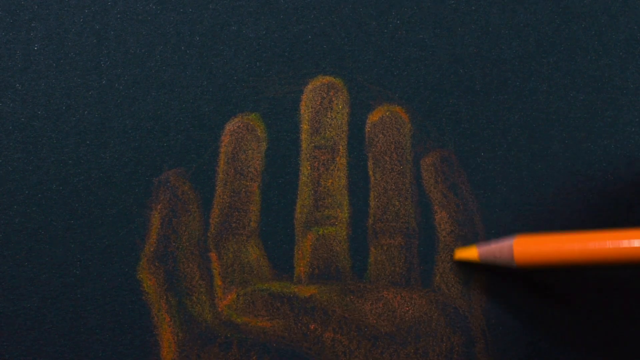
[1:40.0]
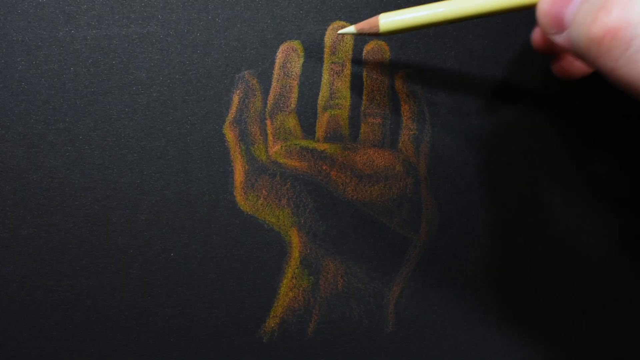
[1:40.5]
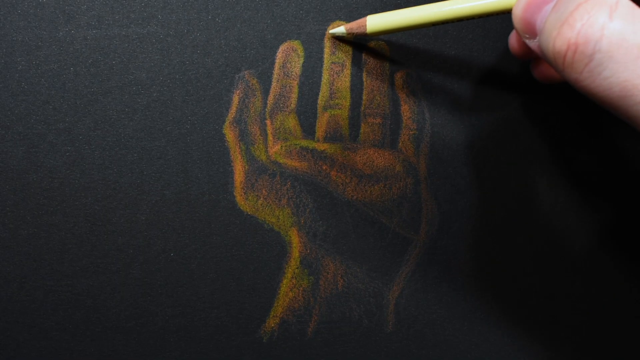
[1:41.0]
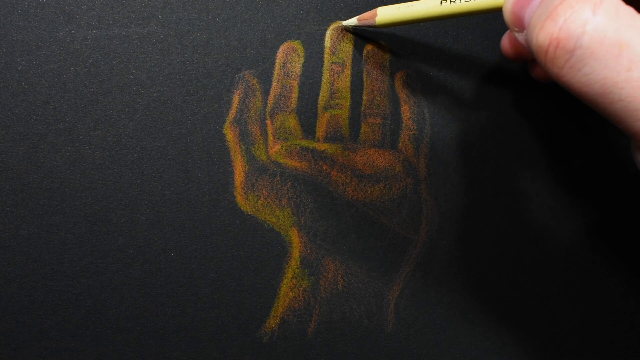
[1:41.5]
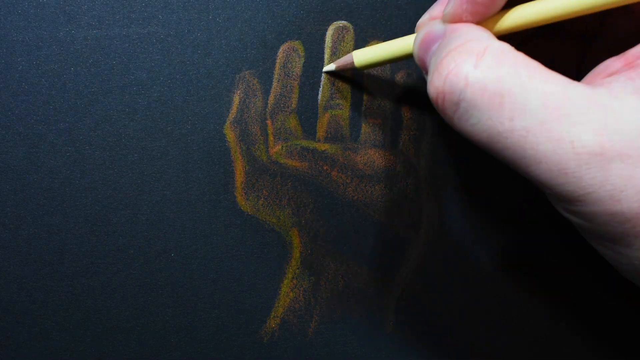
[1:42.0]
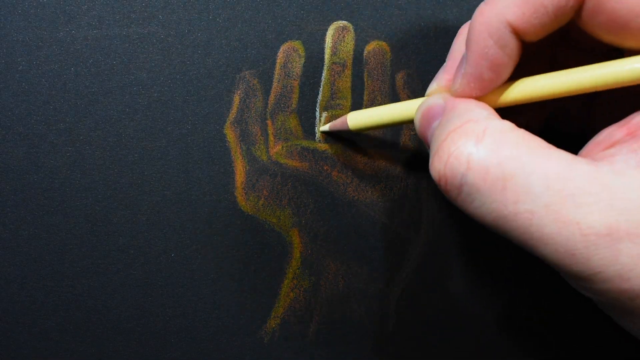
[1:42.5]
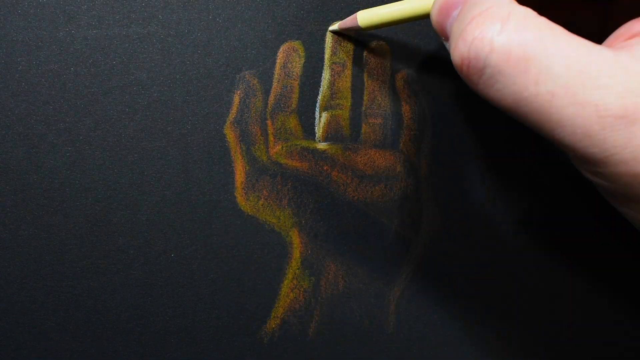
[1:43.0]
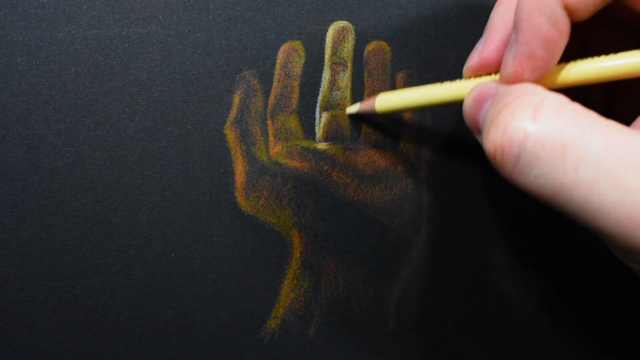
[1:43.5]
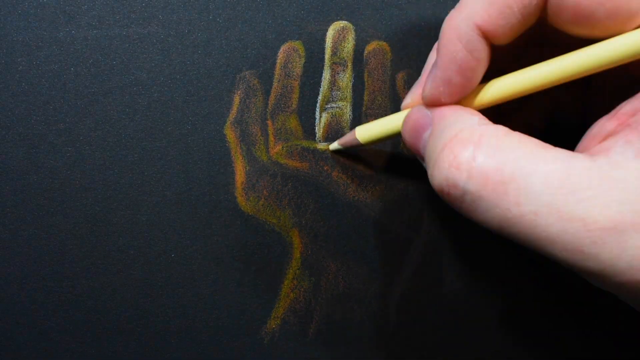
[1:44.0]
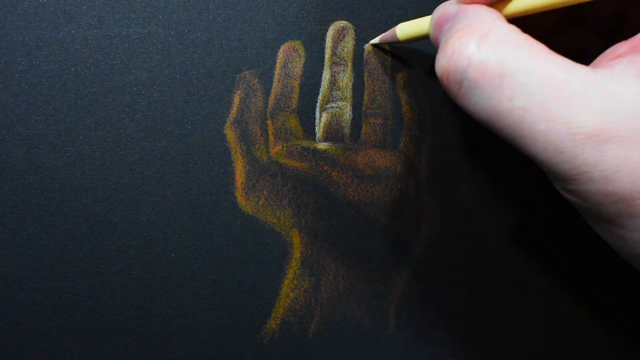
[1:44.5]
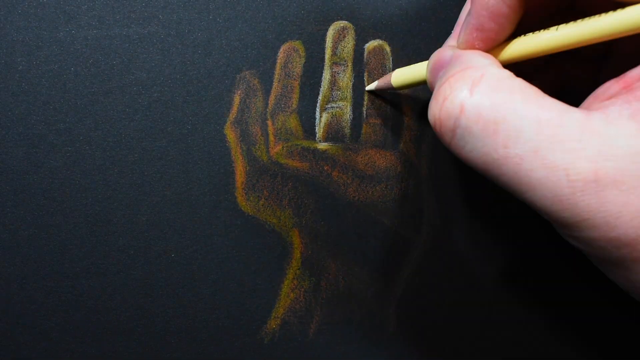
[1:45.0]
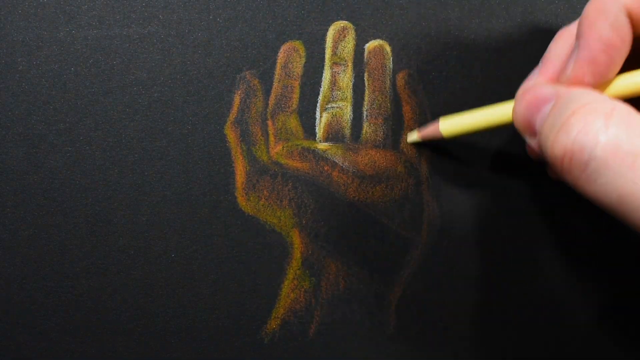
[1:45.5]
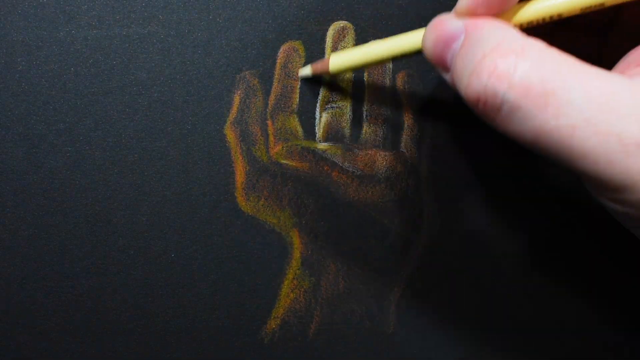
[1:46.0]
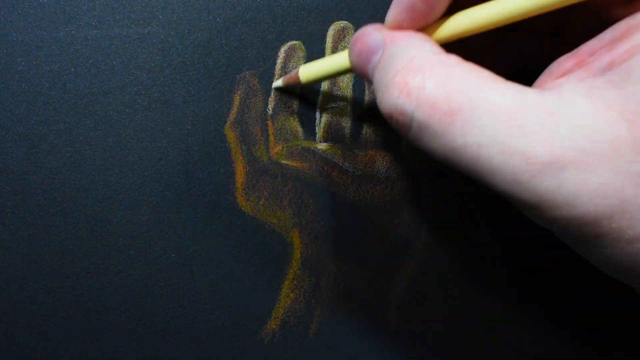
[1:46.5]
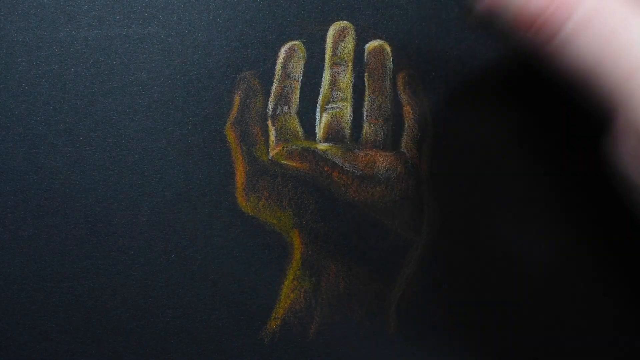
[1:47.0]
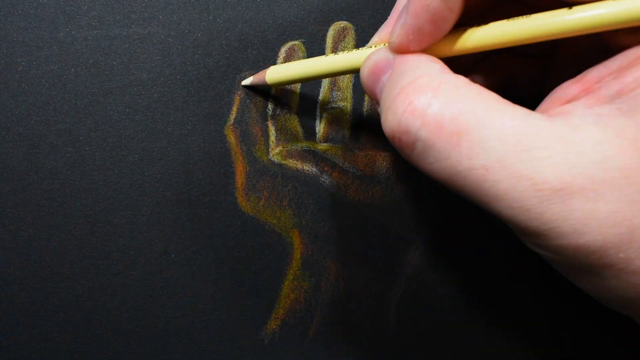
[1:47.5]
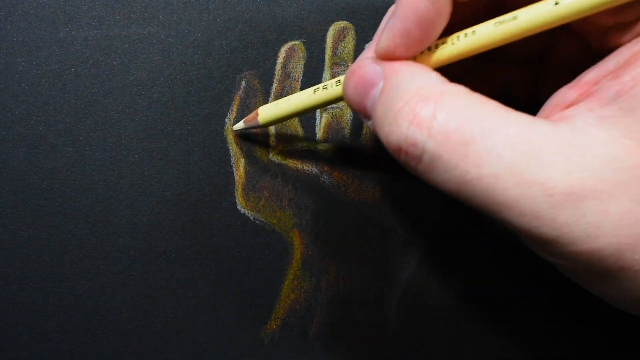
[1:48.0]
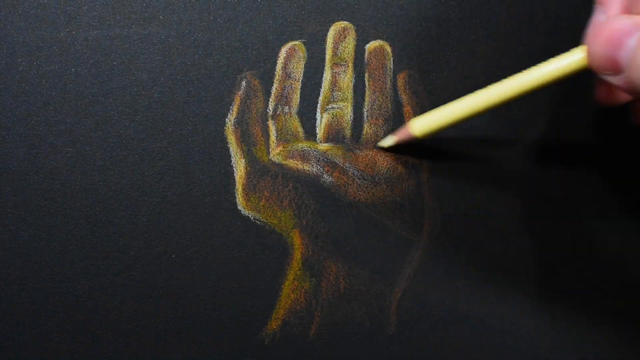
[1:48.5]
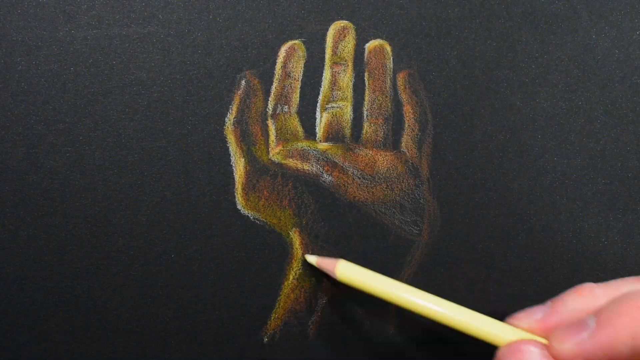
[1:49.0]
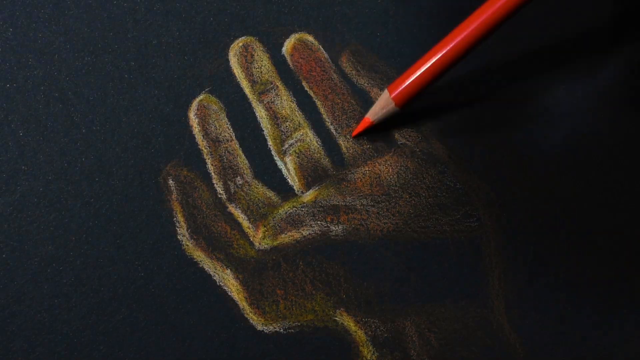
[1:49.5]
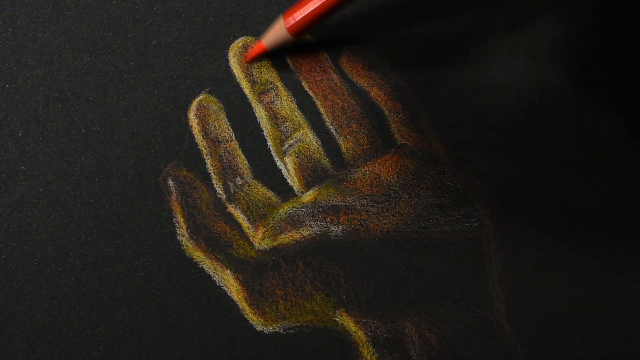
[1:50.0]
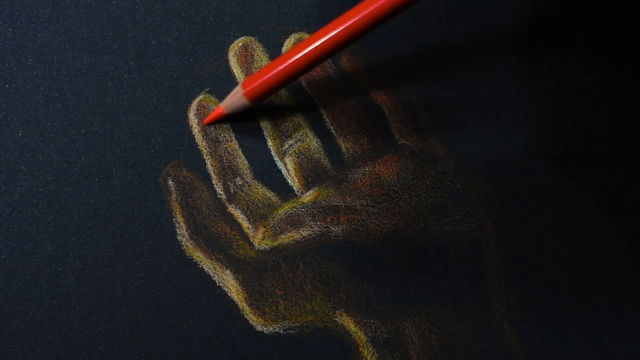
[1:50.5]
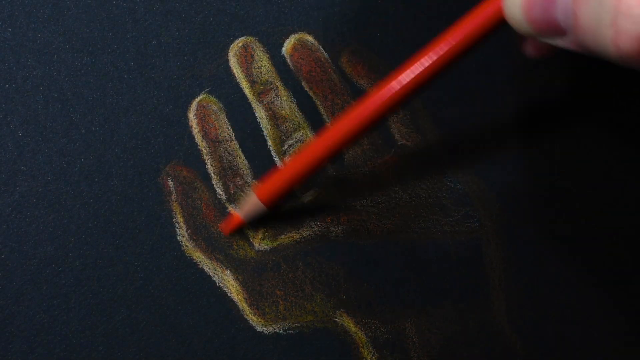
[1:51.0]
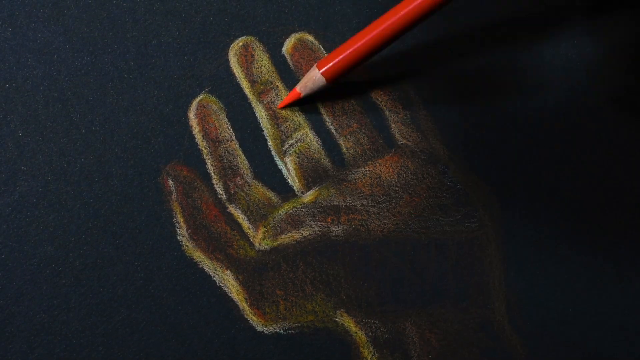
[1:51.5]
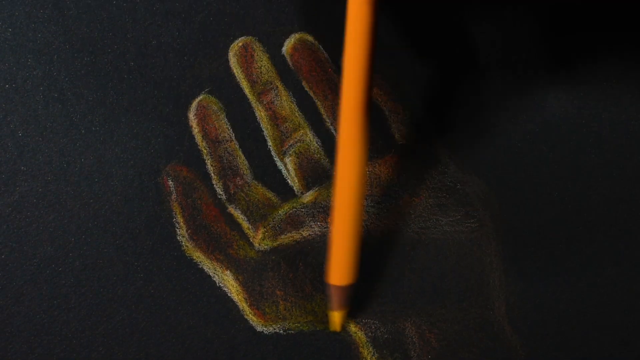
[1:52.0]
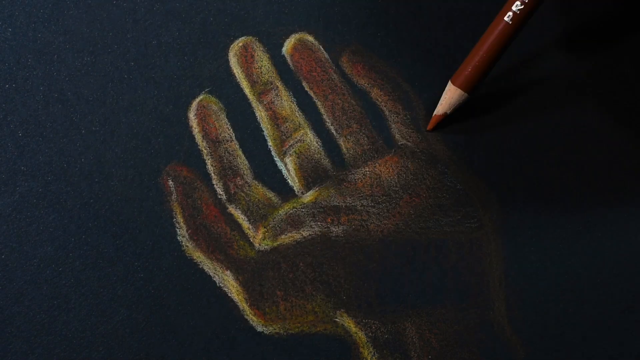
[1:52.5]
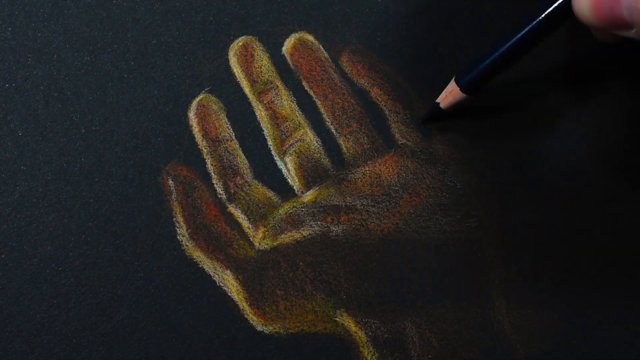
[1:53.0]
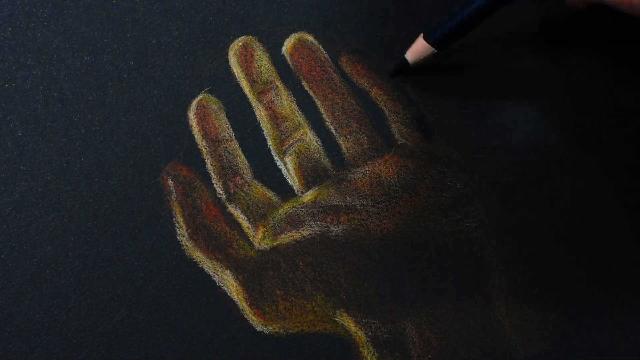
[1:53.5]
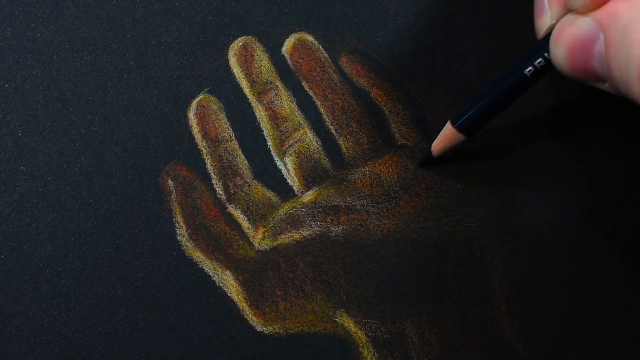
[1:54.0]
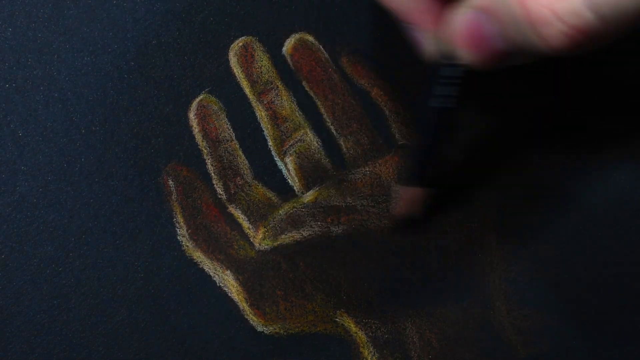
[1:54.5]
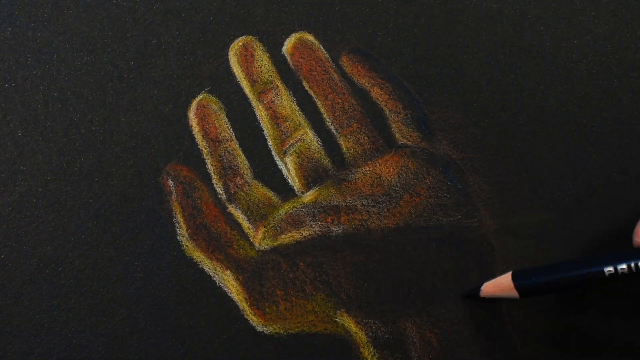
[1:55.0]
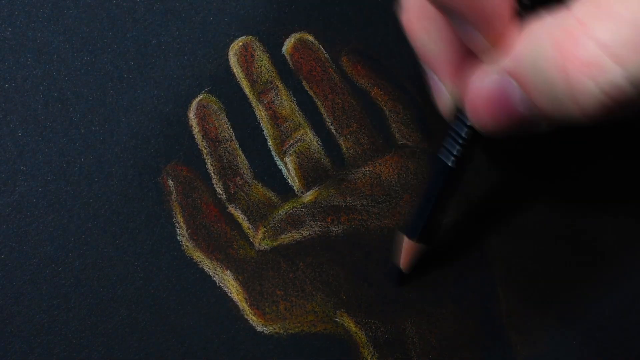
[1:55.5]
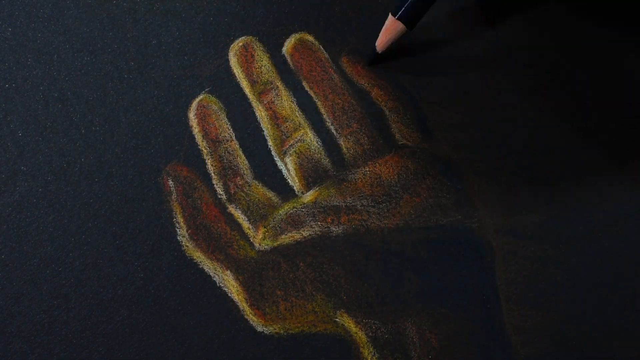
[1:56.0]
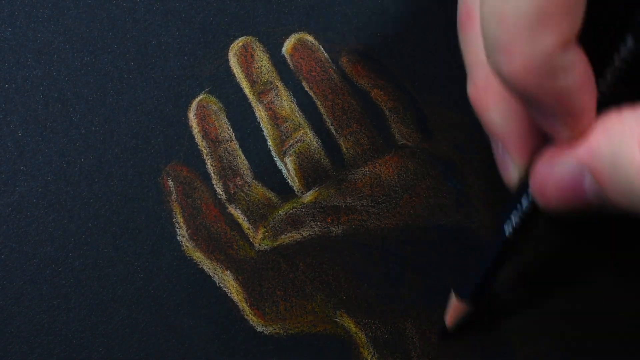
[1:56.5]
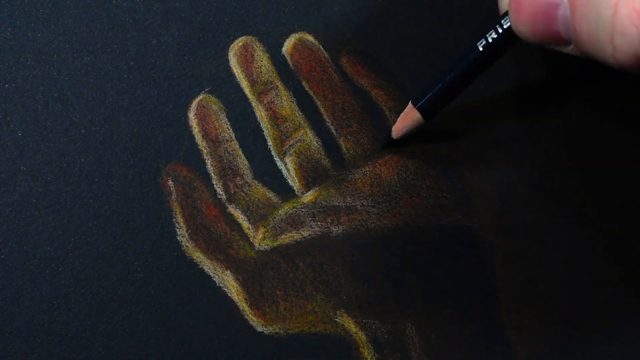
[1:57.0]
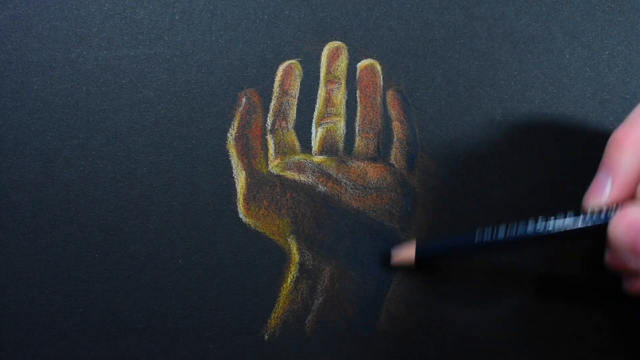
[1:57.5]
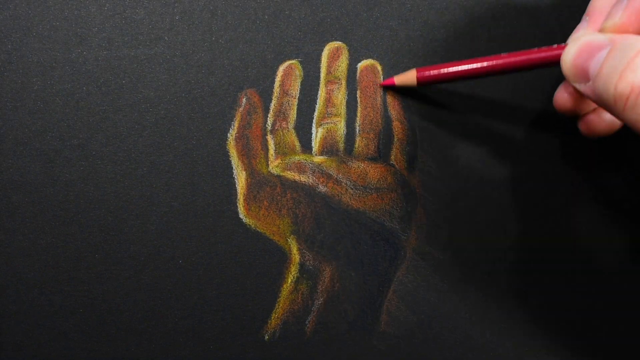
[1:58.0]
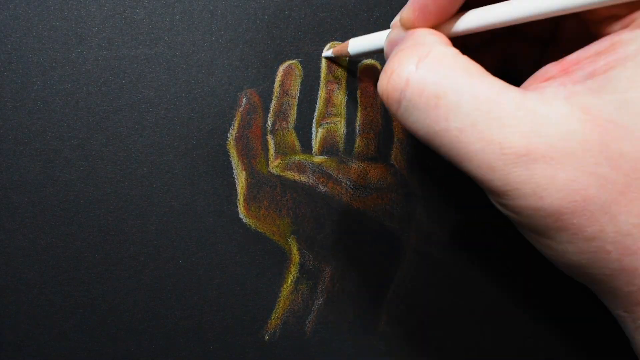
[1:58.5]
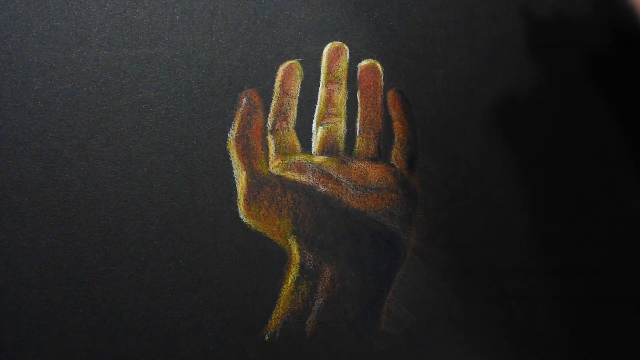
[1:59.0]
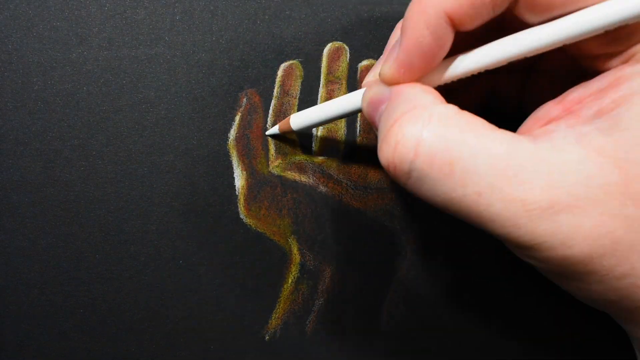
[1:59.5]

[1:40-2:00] A black book with white spirals on the left-hand side is on a big, smooth glass table, and there appears to be a man. He has a box of matches and a matchstick, lights one candle, uses it to light three more, and places them around the book on the table. It seems to be a rather relaxing environment for him to write or draw in. He then has six different colours, makes a small mark on the black paper and swatches two other colours on the white paper. The man then outlines what looks like a hand, and as he shades in the picture more details of the fingers become visible. He uses a dark red pencil for this.